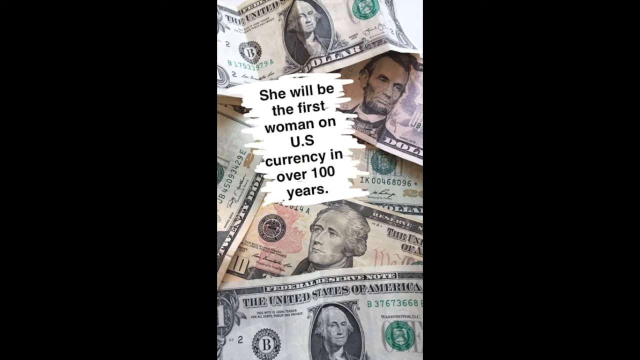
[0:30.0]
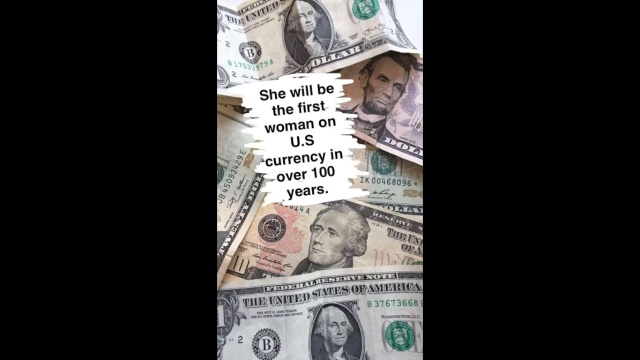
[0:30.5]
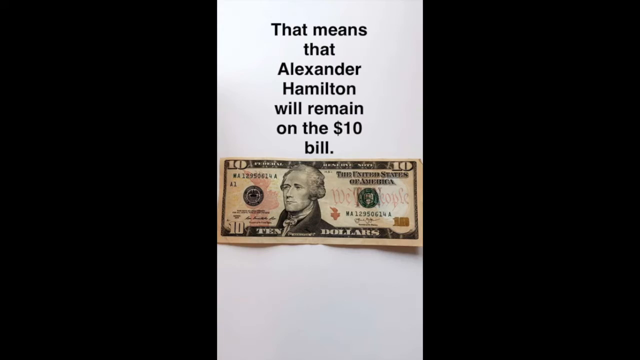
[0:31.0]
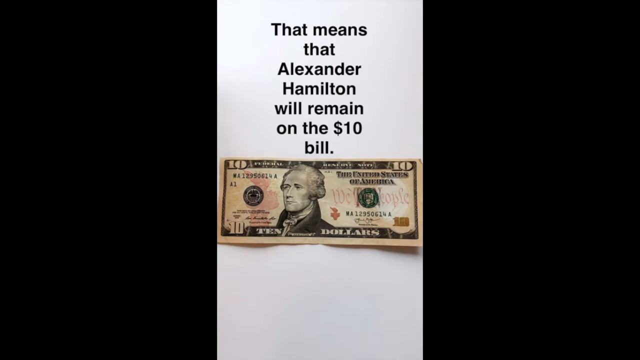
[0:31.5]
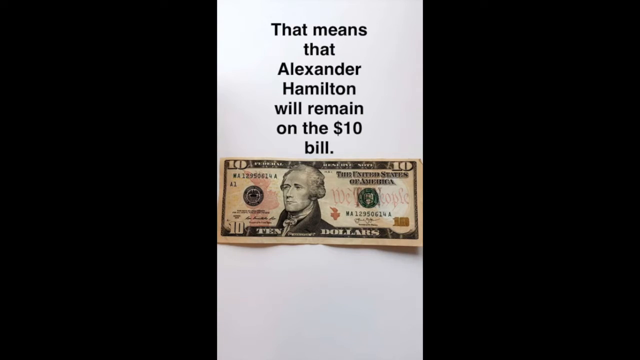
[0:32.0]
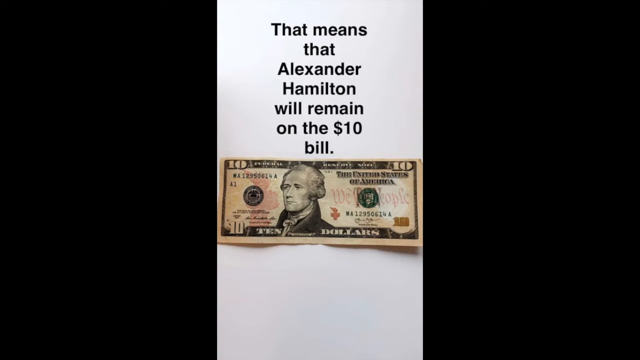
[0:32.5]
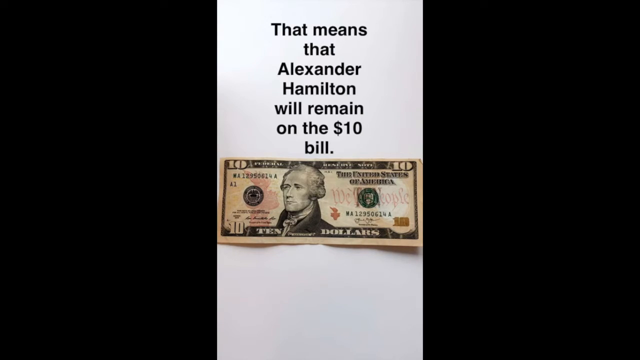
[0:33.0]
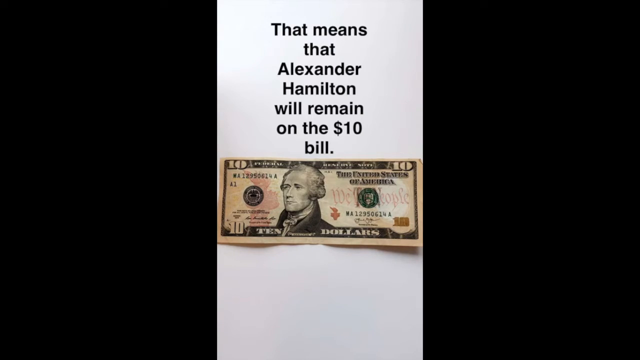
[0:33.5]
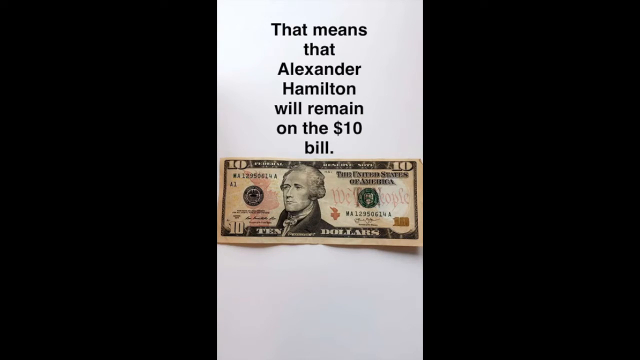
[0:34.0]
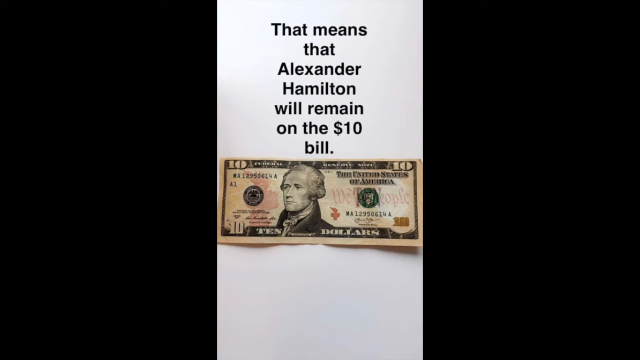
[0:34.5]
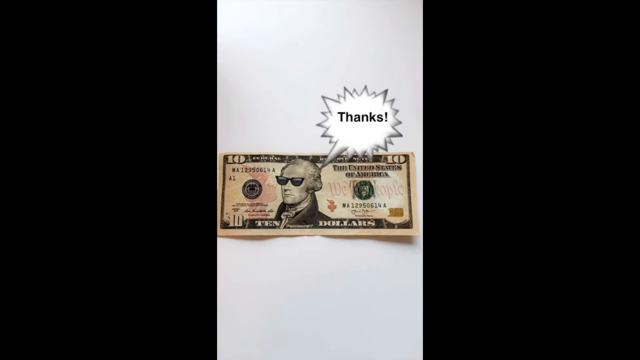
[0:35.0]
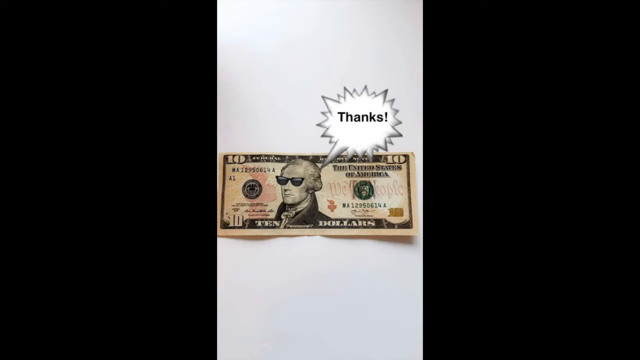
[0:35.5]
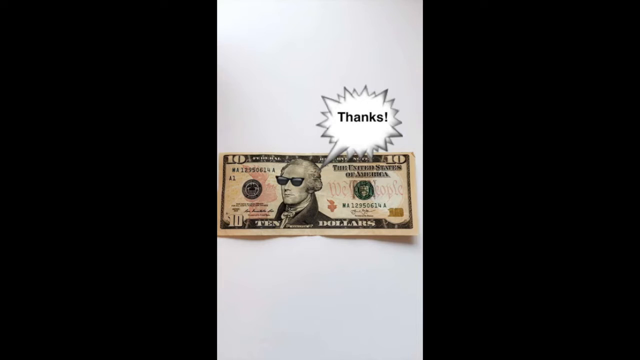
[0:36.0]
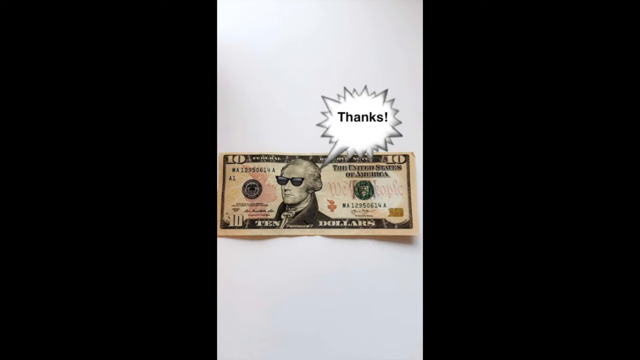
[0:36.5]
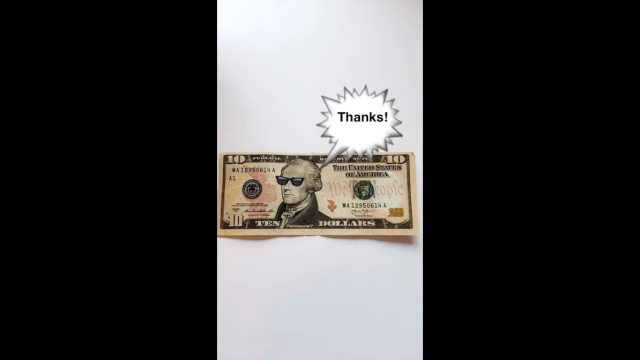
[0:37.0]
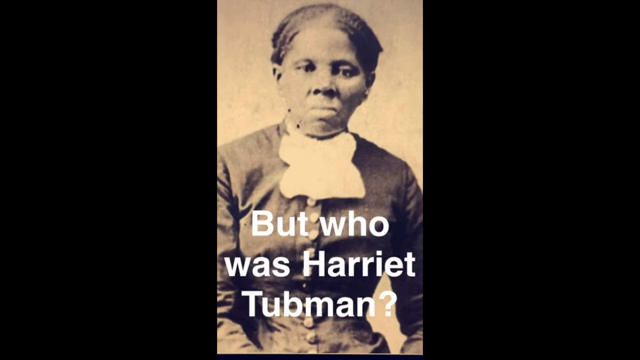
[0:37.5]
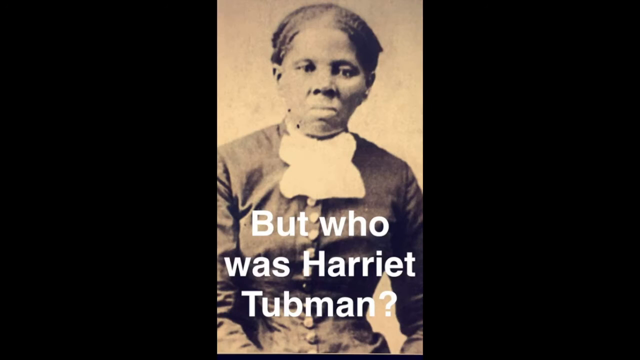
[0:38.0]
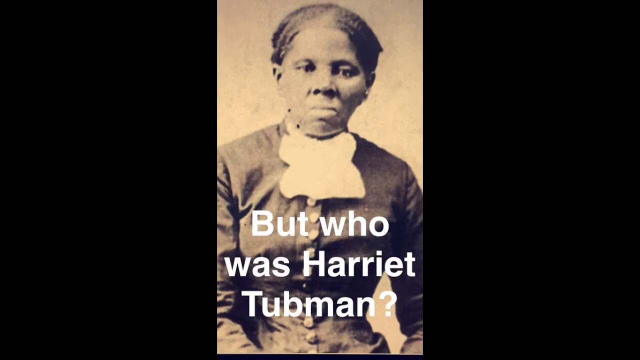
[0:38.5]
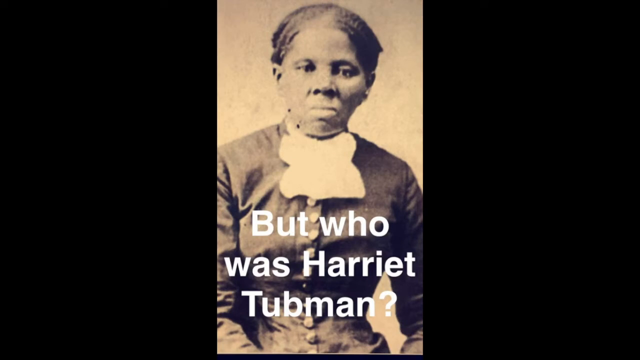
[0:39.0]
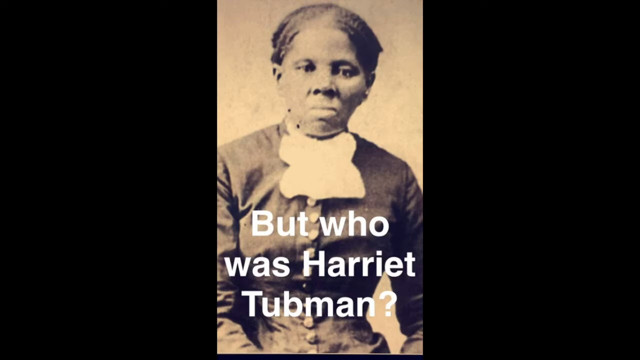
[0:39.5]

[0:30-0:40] The view switches to the $10 bill in particular, which rests slightly below the center of the image on a plain white background. Above it, black text in seven lines reads "that means / that / Alexander / Hamilton / will remain / on the $10 / bill." The image then changes to show the $10 bill with a small edit: Hamilton wears sunglasses, and a speech bubble with sharp, spiky edges around it says "thanks."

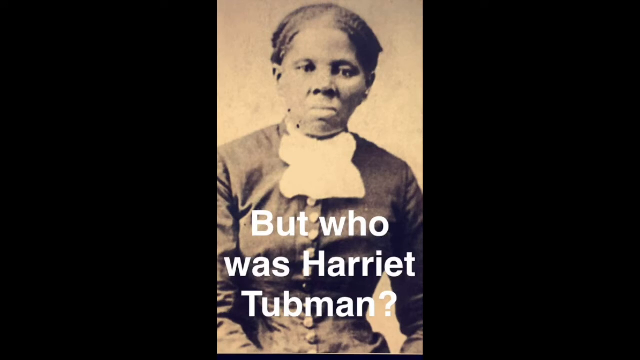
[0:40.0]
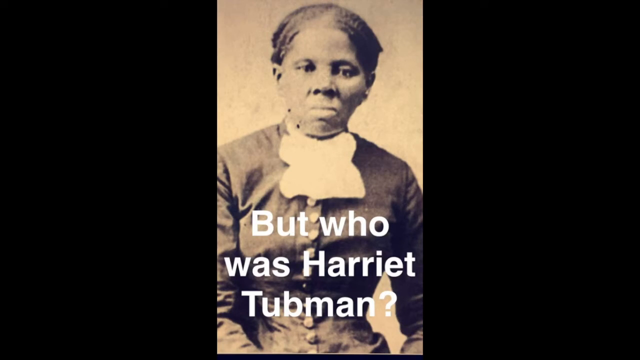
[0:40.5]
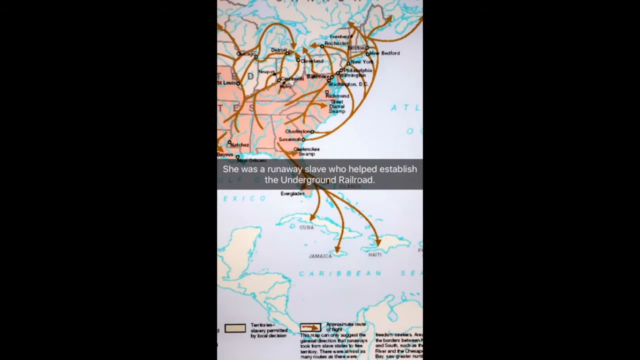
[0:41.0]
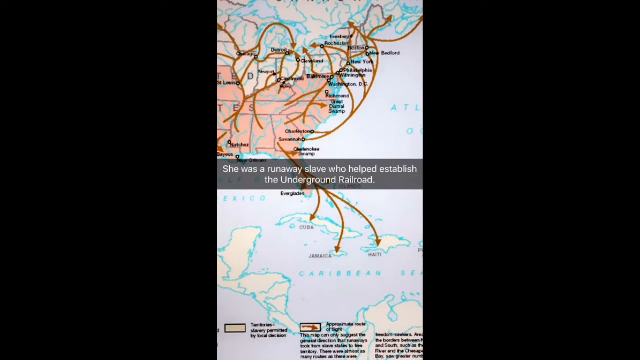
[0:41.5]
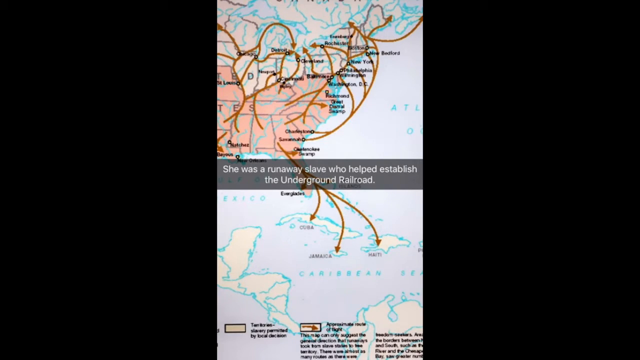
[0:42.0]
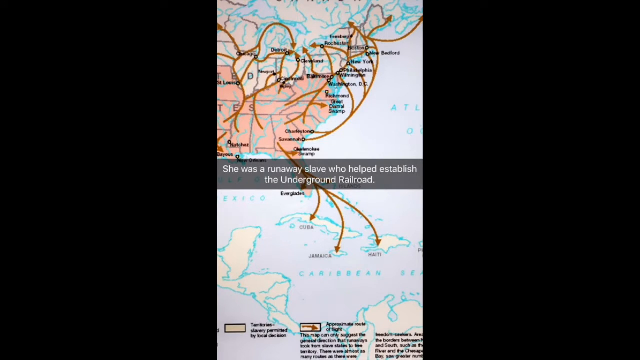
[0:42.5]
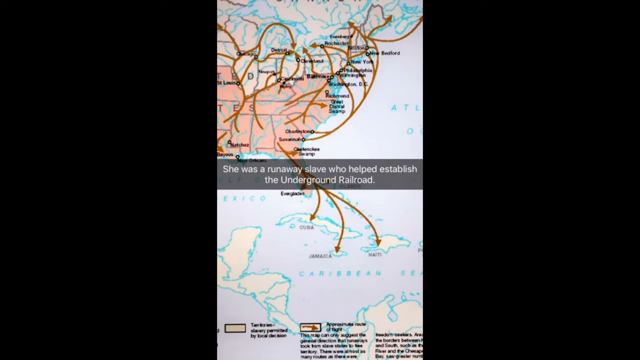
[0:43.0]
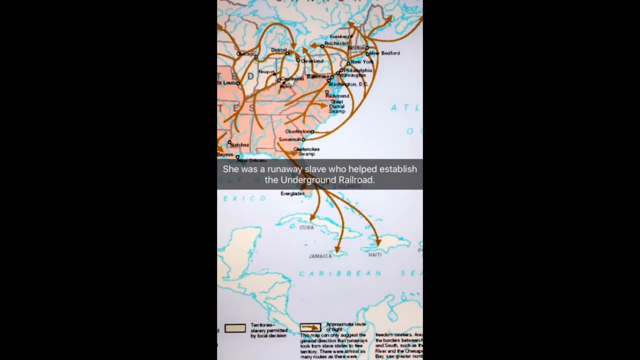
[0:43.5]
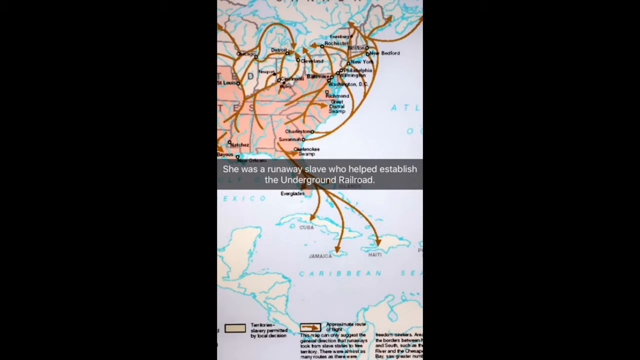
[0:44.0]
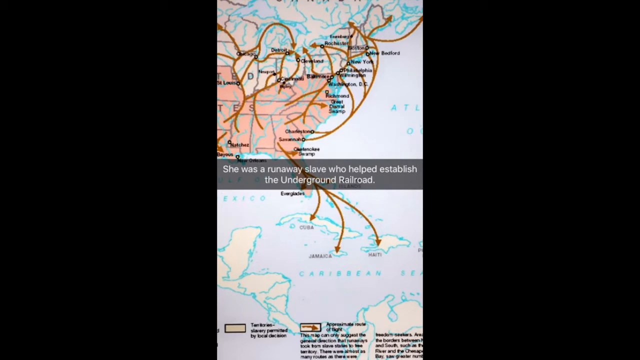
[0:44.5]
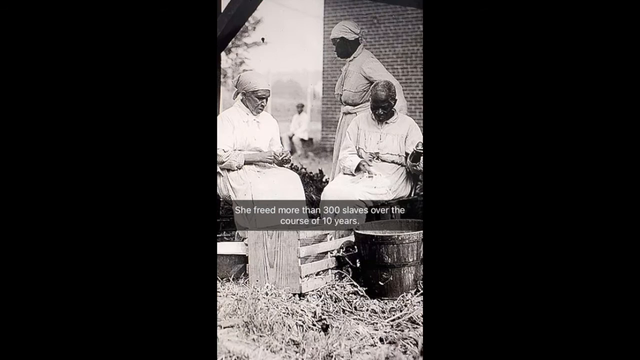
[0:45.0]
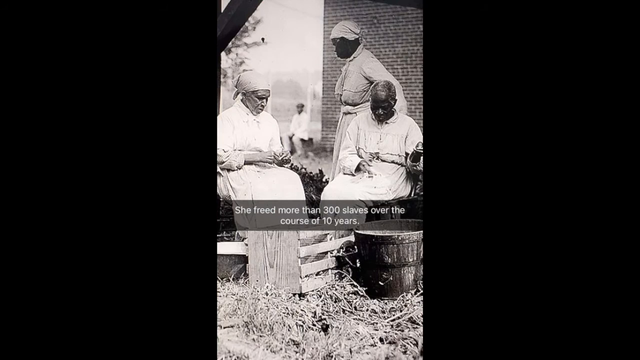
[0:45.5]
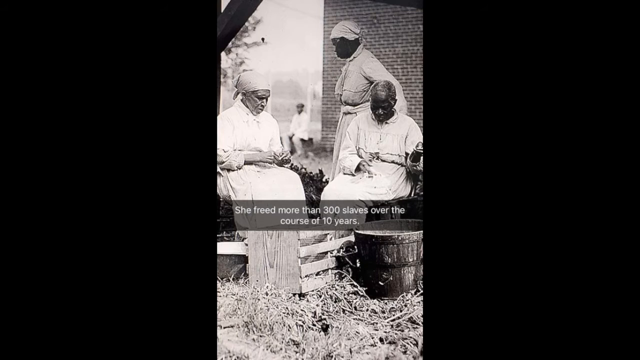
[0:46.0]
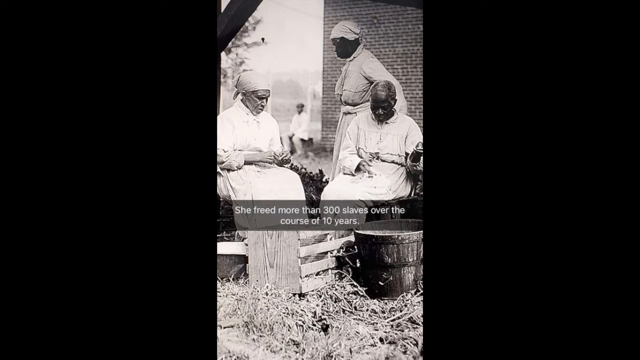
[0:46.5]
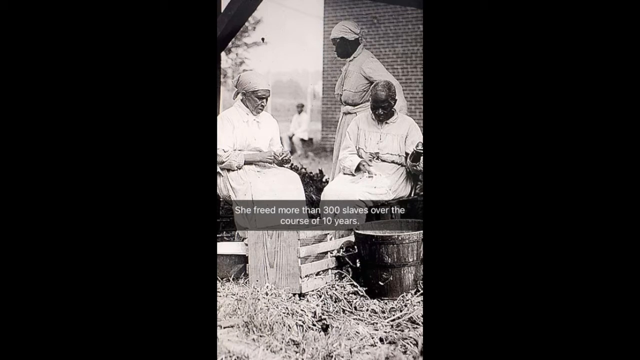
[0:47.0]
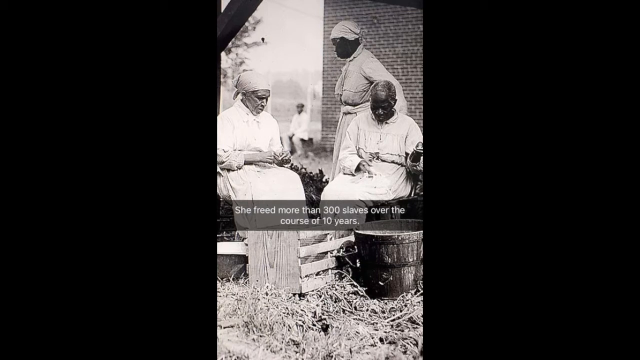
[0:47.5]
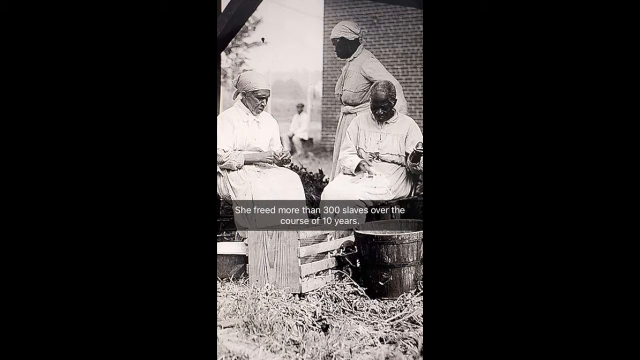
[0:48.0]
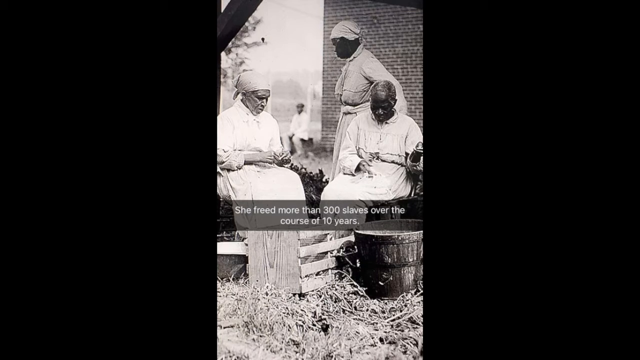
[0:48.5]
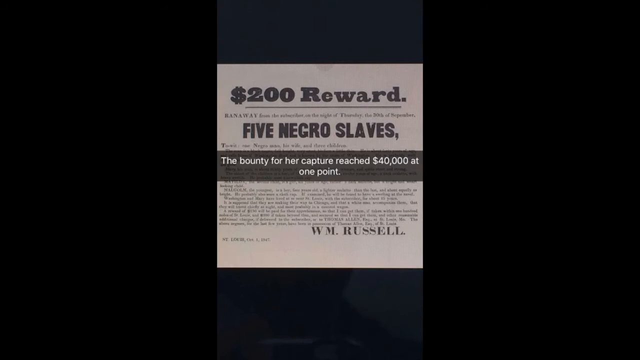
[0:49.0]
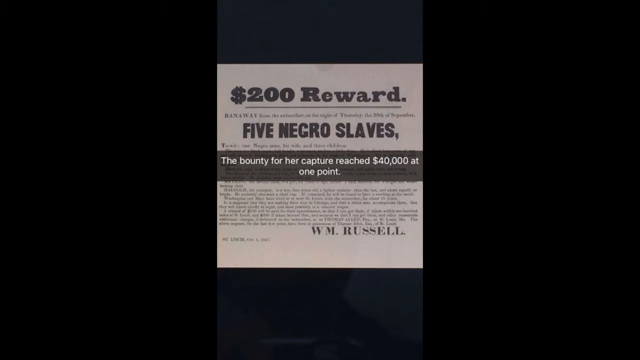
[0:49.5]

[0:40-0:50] An image of Harriet Tubman appears, sort of yellow and black, with image quality sort of like the late 1800s. She stares at the camera with a sort of stoic expression, not smiling. Text below it, in three lines, reads "but who was Harriet Tubman." Next is a picture of the eastern US coast from back when the US was about half its current size. It shows the divide between the Southern and Northern states, with the Southern states colored a sort of red and the Northern states white. Many cities are labeled, and arrows point along the paths she took with the Underground Railroad. A black bar across the middle carries white text reading "she was a runaway slave who helped establish the Underground Railroad." The arrows lead from Southern states to Northern states, with a few going to the Caribbean islands.